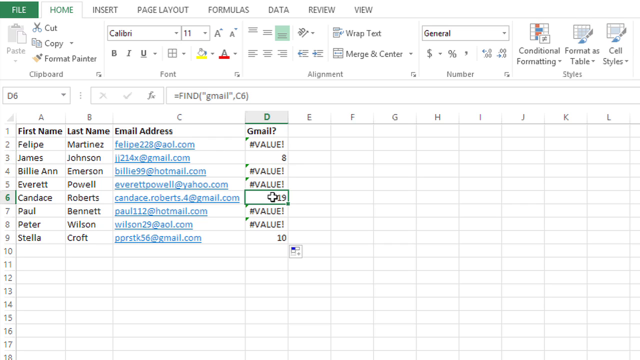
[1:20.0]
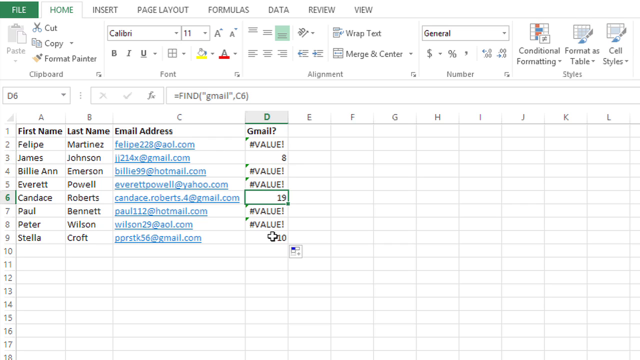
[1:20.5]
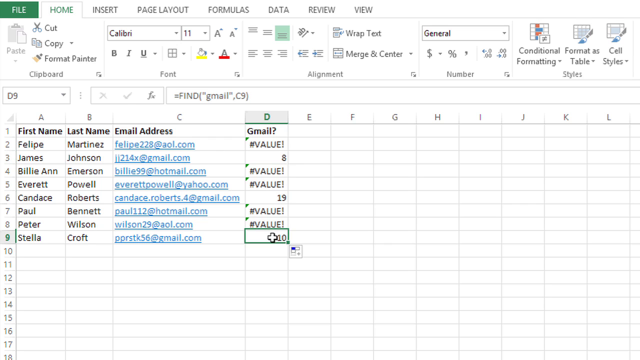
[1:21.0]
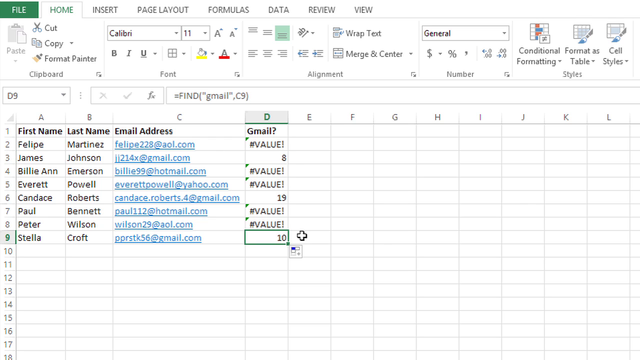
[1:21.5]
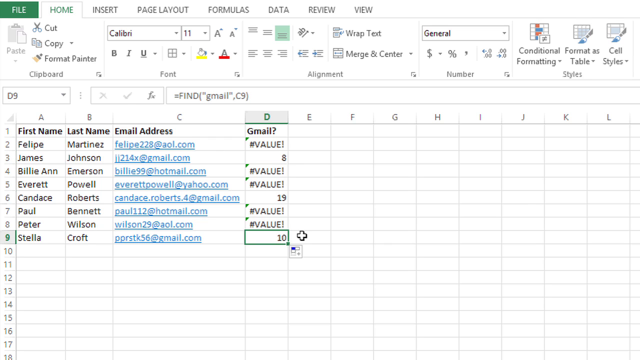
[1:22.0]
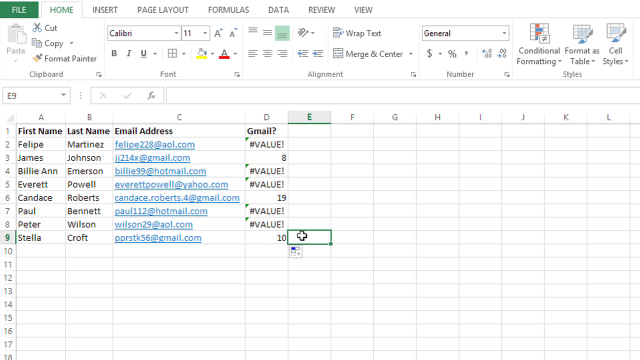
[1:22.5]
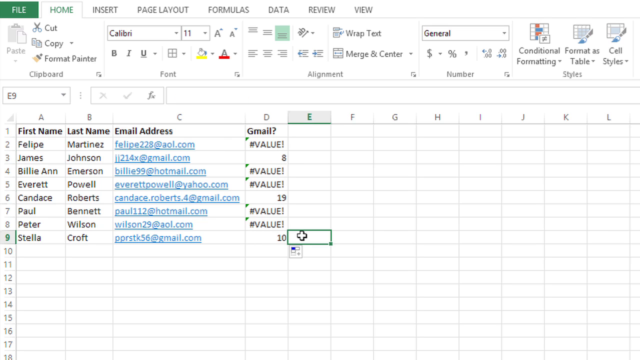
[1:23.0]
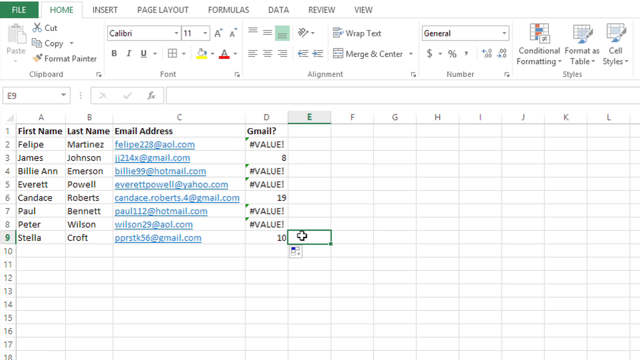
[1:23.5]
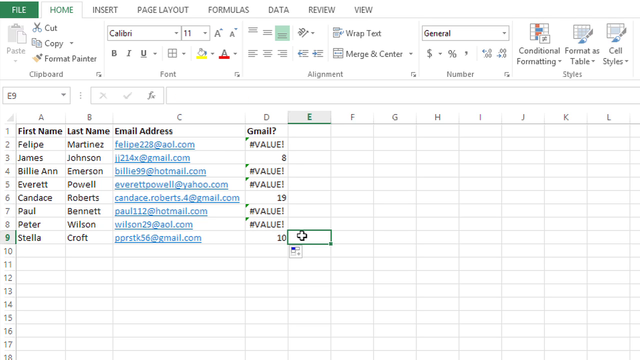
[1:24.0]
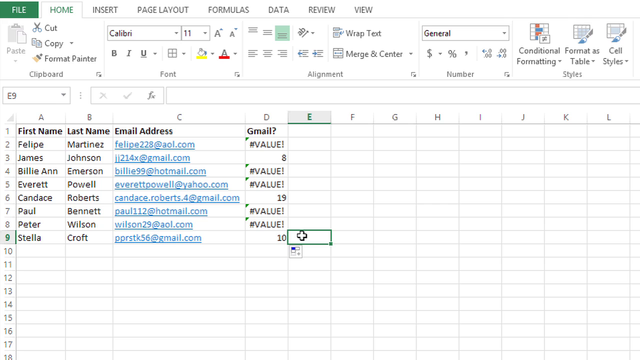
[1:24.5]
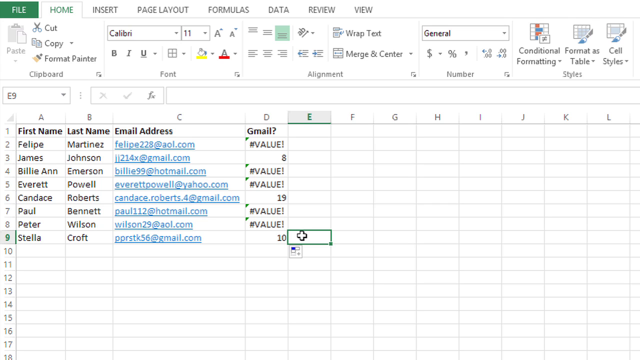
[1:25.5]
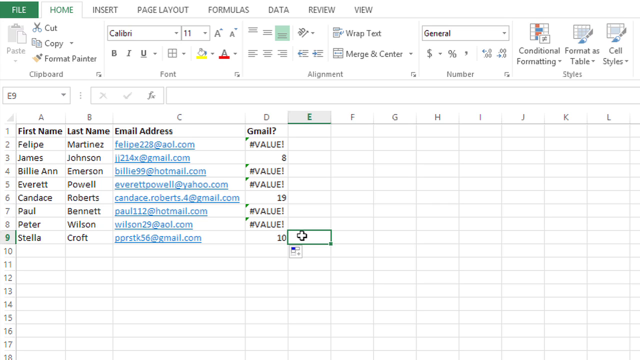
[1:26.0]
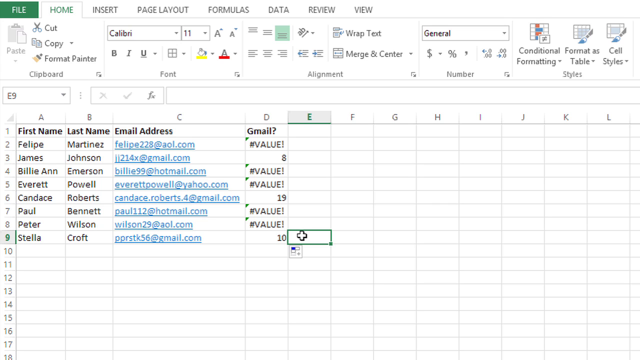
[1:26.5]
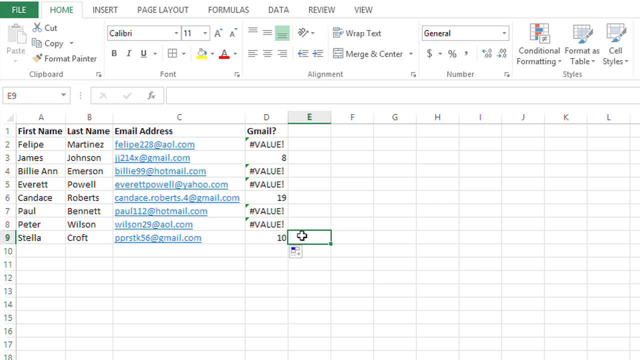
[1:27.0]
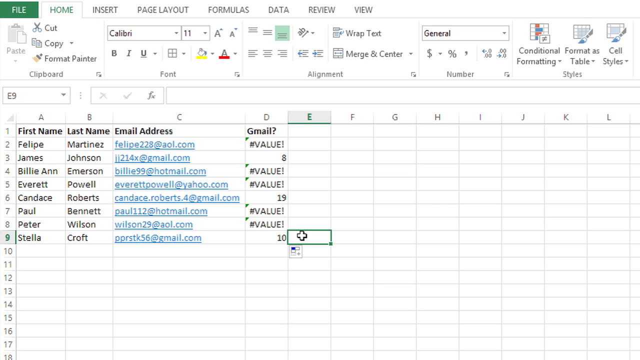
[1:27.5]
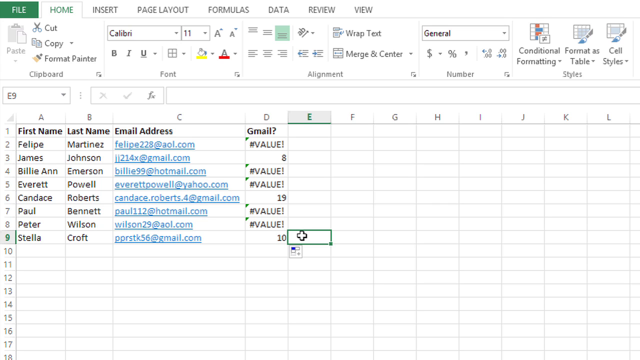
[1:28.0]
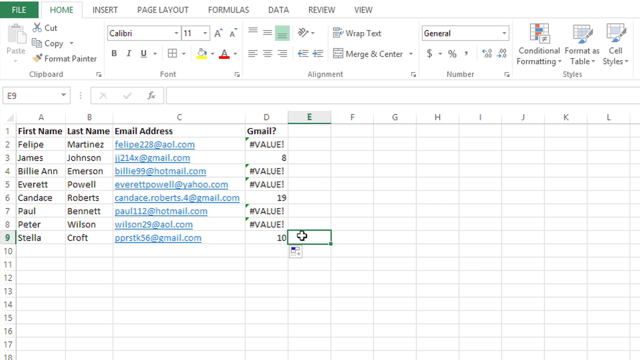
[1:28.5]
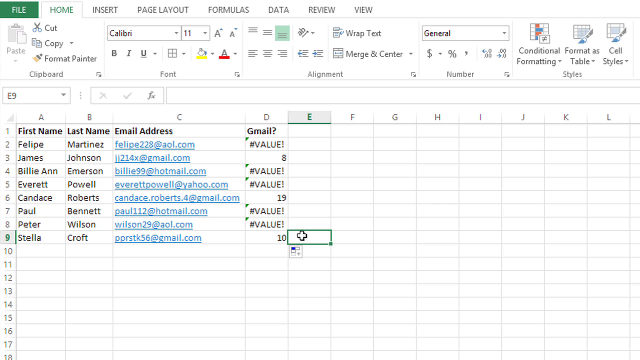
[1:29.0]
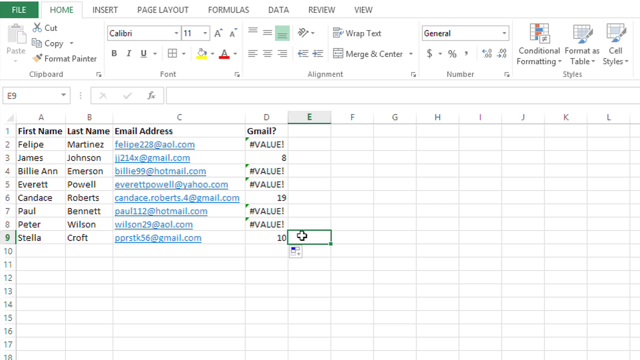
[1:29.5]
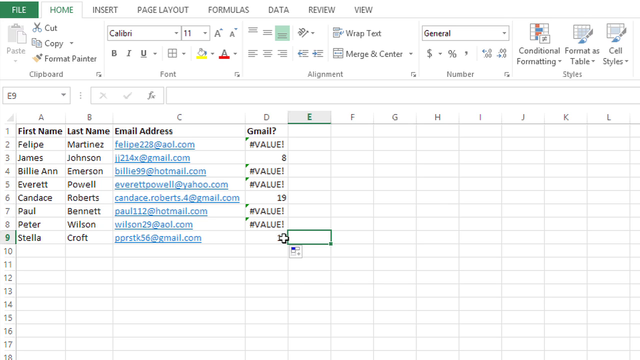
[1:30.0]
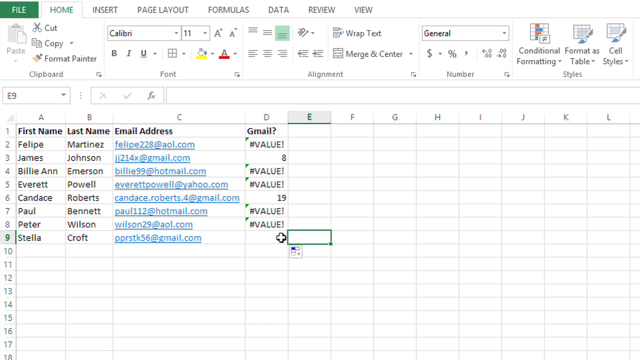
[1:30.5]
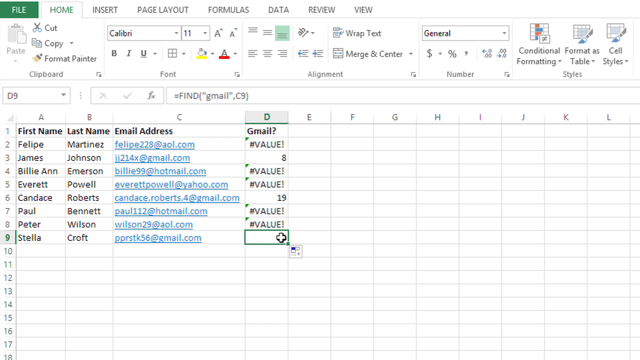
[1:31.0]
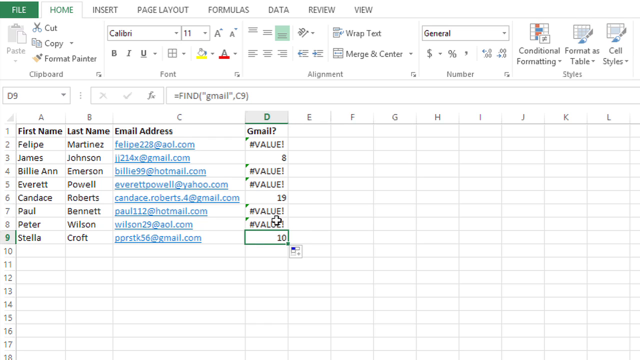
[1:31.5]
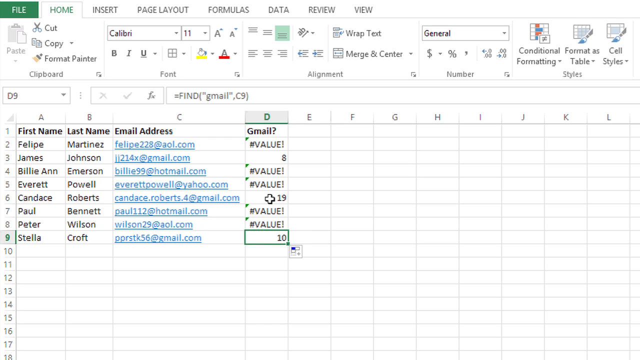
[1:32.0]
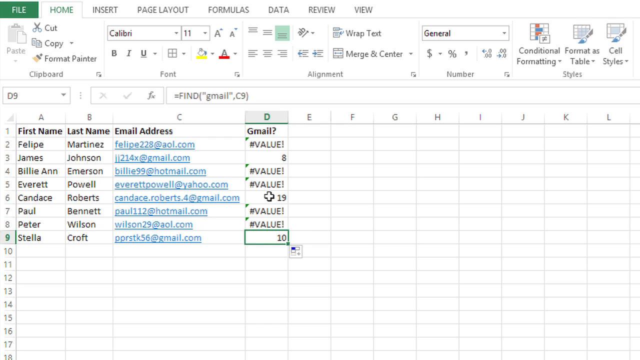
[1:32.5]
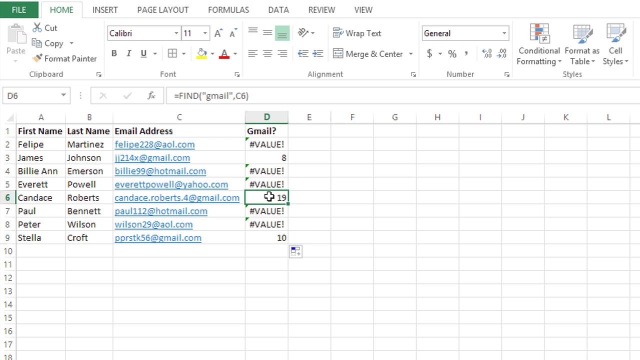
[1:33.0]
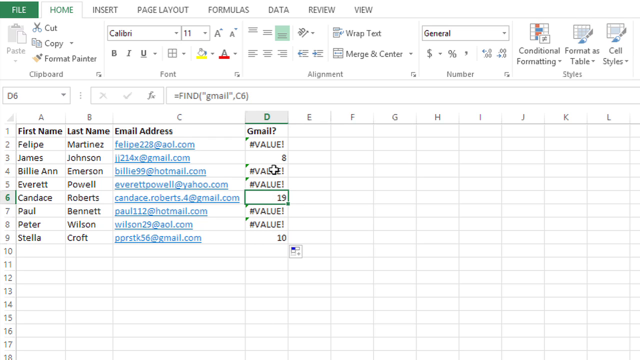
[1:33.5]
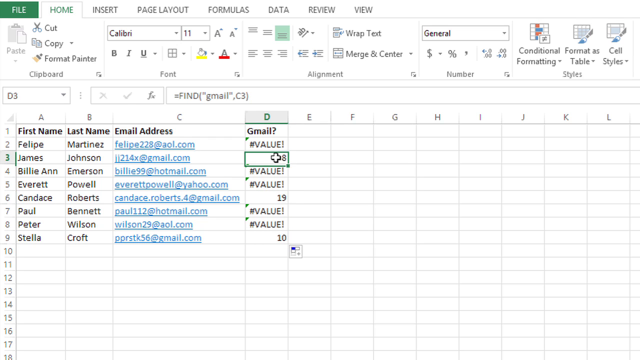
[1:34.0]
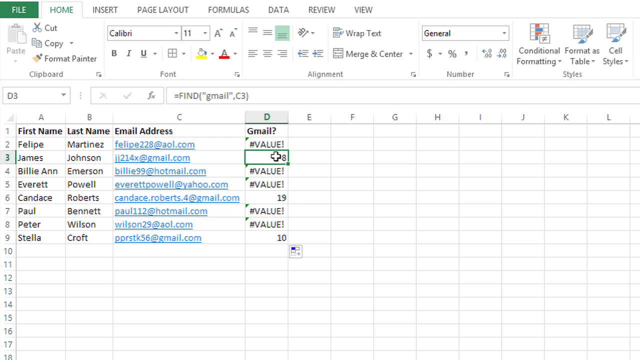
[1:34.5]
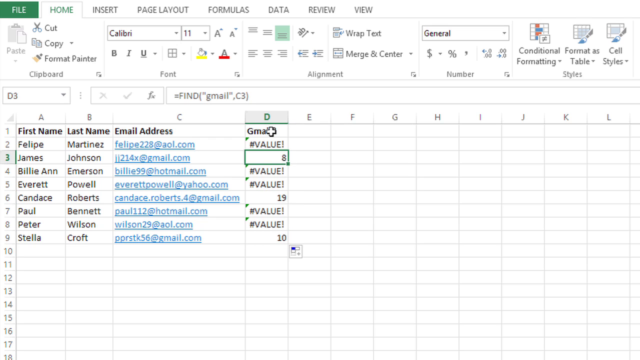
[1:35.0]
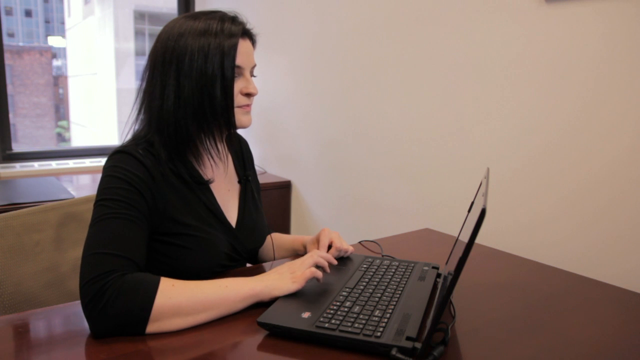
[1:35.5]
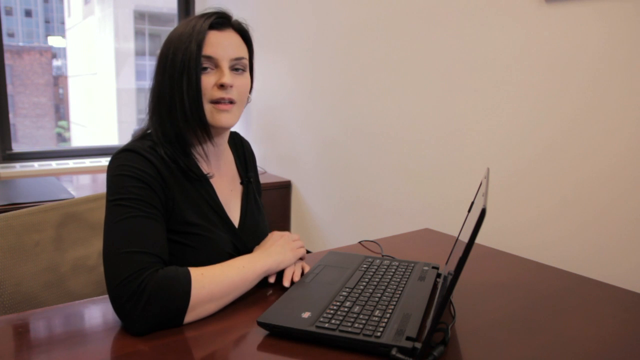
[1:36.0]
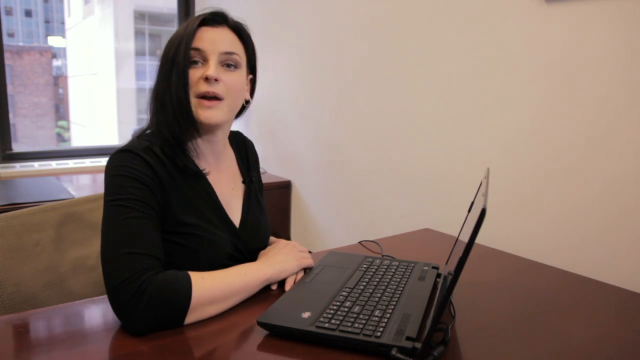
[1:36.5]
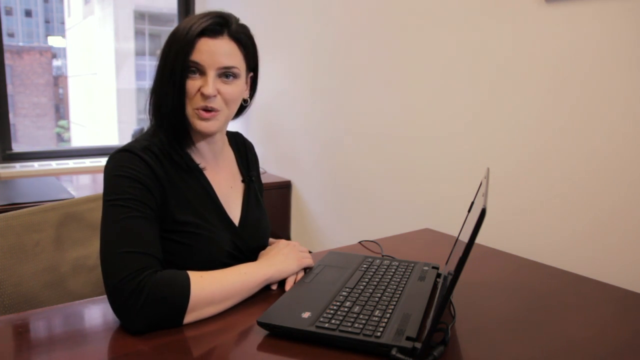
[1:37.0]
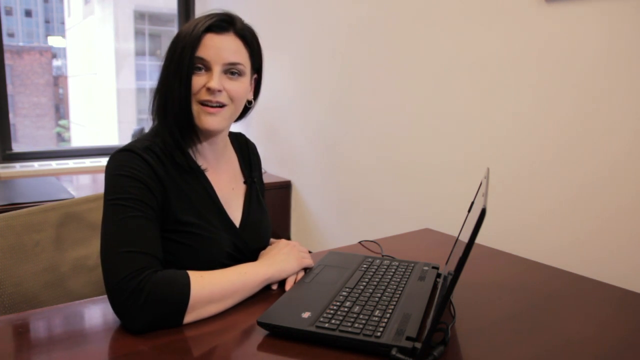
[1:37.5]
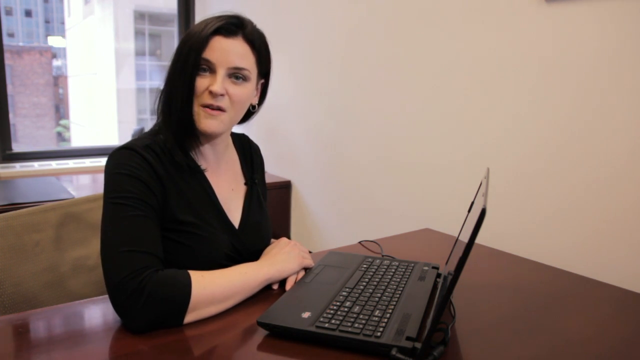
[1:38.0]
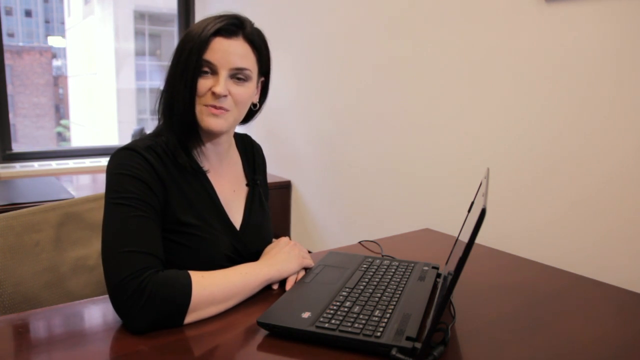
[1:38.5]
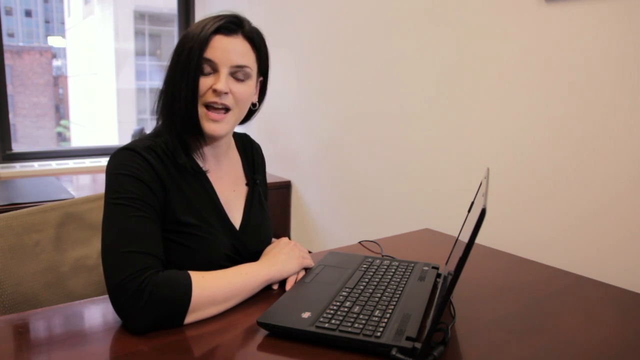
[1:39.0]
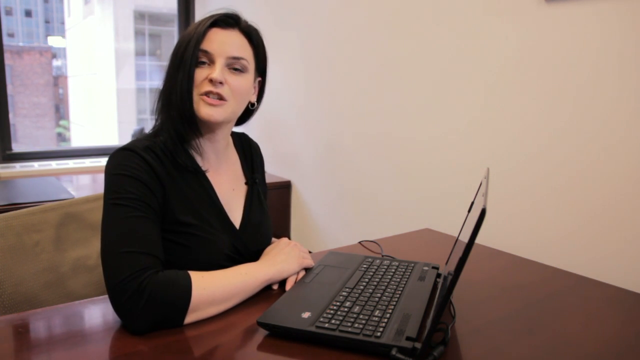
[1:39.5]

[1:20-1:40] In the Excel document, the person is trying to fill out column D, titled Gmail with a question mark after the word. They type in commands searching for the Gmail addresses of the people listed in rows two through nine; the first, in row two, is Felipe Martinez, and the person in row nine is Stella Croft. The find command appears to have been entered for these people, but apparently none of the Gmail addresses have been found, since no Gmail address has been entered in any row under column D. Then the woman is shown sitting in the office talking, and she turns to face the camera as she talks. She sits at a desk with an open laptop in front of her, apparently the person who was editing the Excel document. She wears a black shirt and has her head turned to the side as she talks to the camera.